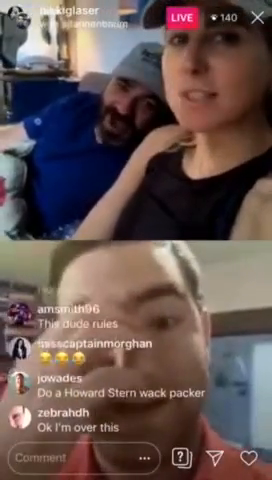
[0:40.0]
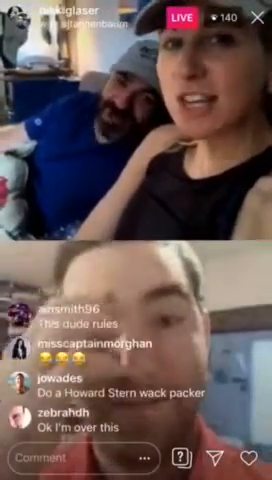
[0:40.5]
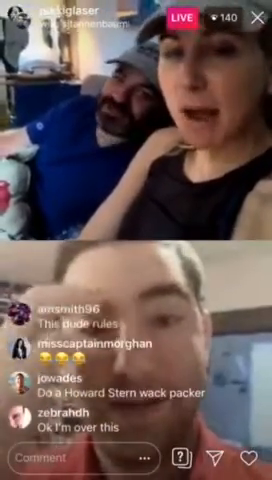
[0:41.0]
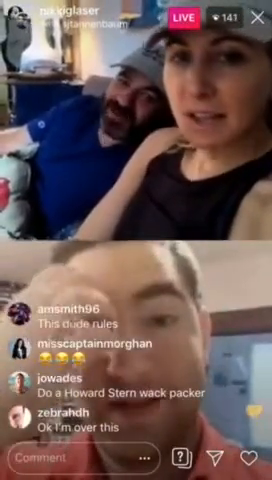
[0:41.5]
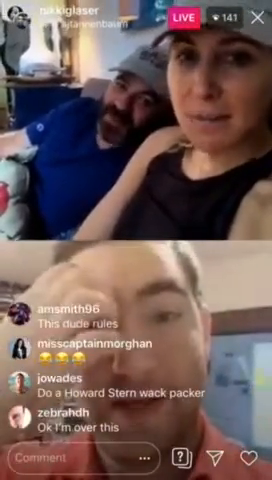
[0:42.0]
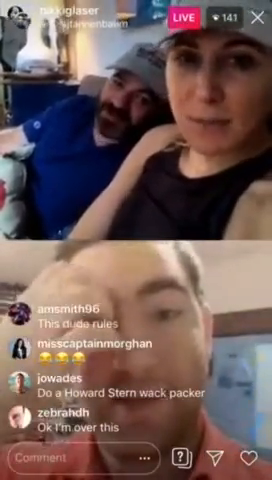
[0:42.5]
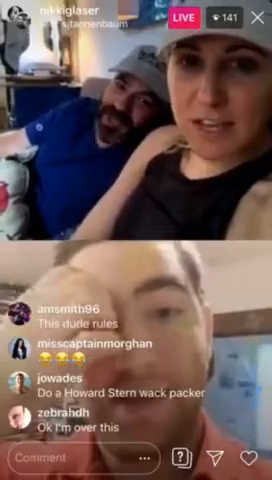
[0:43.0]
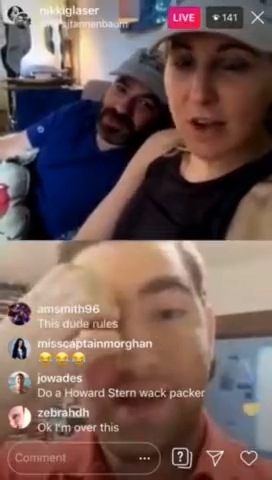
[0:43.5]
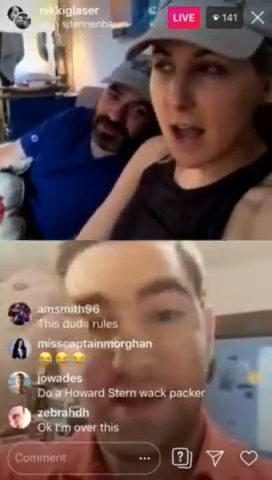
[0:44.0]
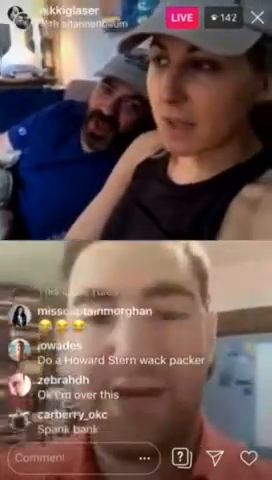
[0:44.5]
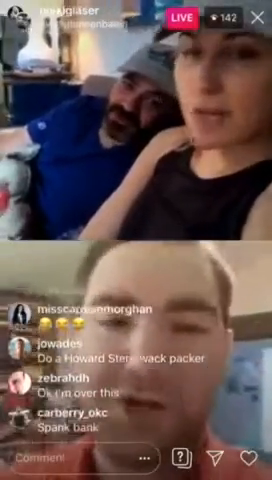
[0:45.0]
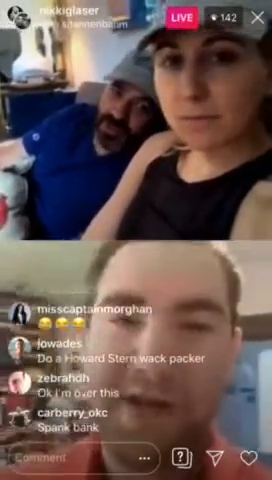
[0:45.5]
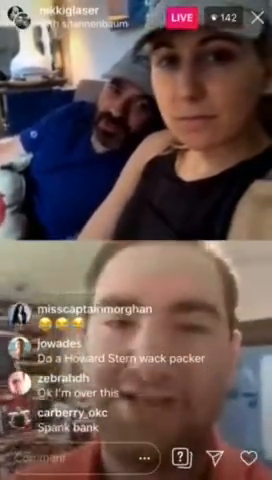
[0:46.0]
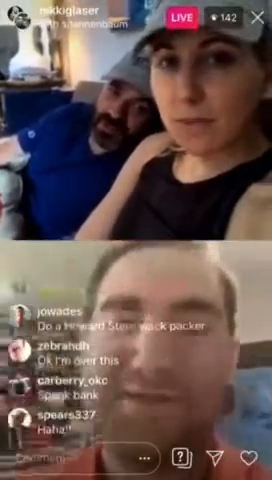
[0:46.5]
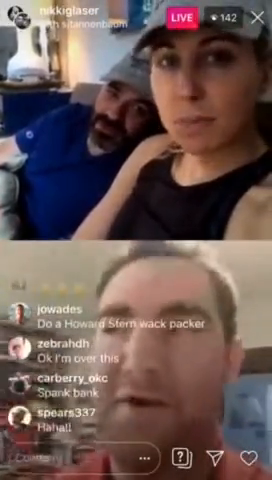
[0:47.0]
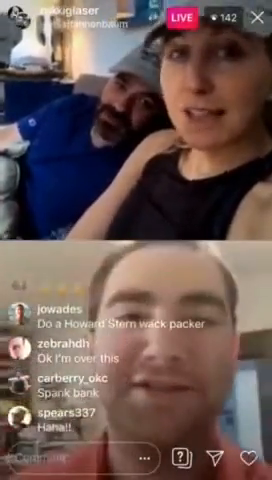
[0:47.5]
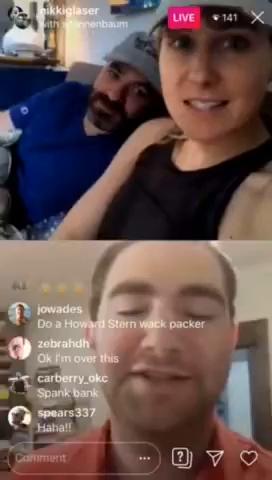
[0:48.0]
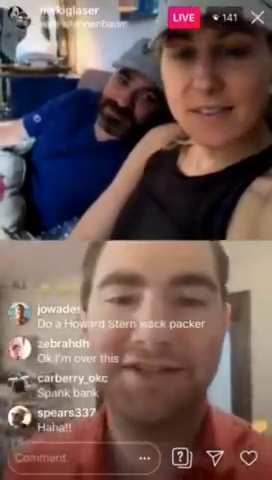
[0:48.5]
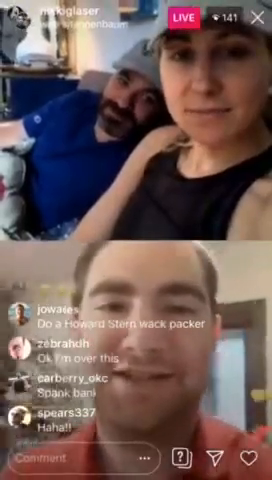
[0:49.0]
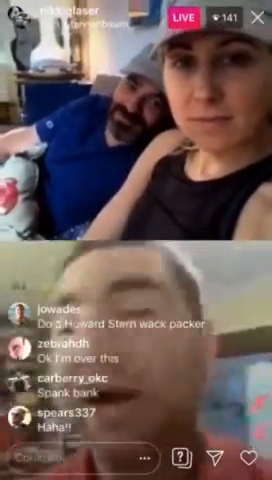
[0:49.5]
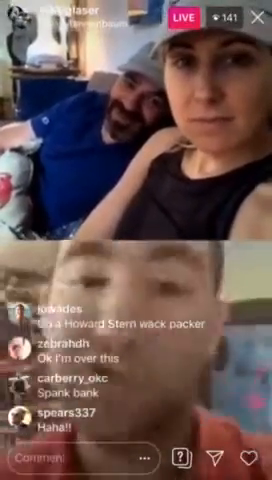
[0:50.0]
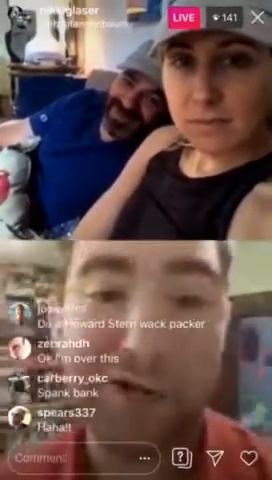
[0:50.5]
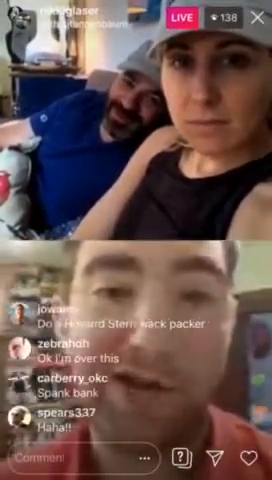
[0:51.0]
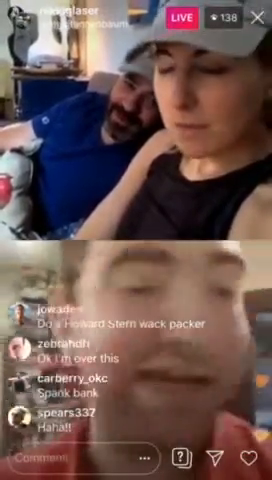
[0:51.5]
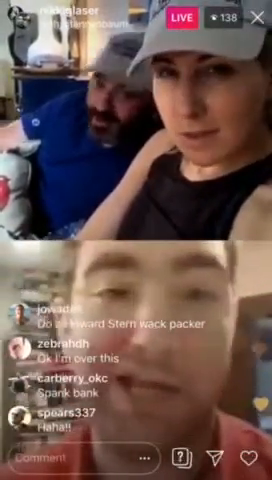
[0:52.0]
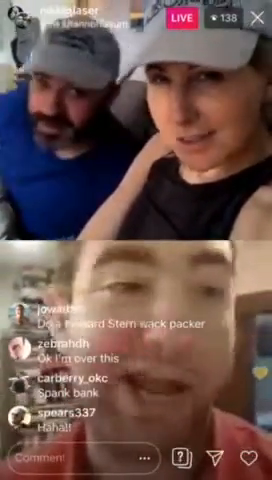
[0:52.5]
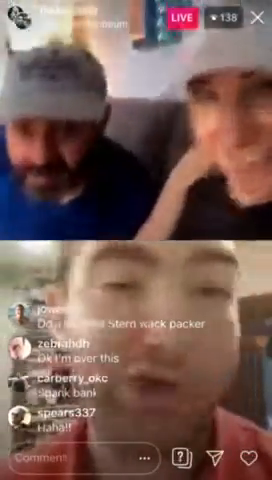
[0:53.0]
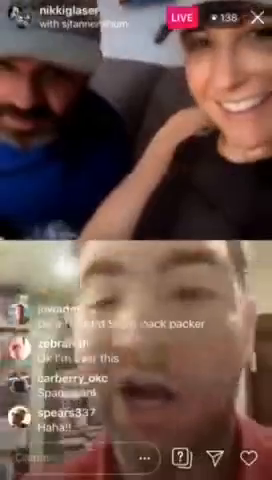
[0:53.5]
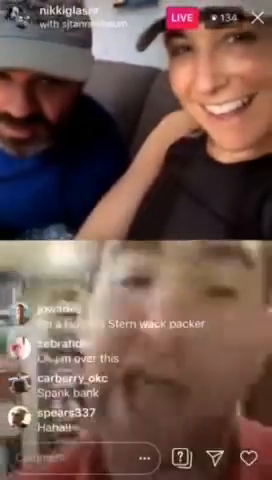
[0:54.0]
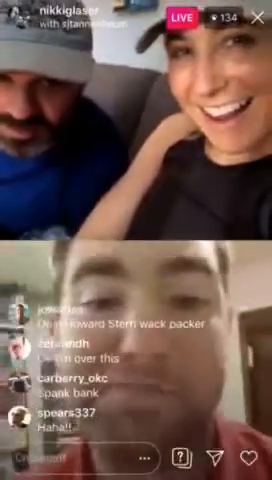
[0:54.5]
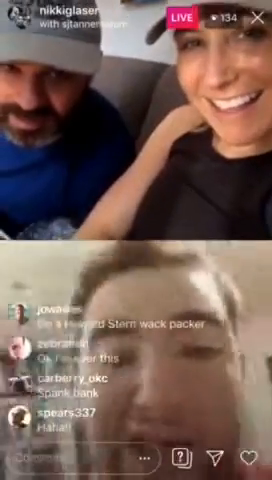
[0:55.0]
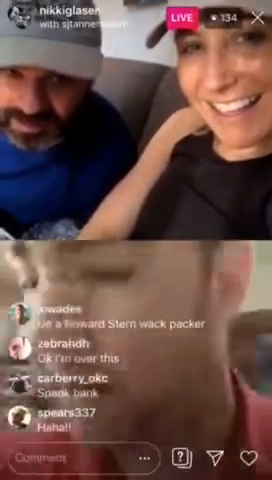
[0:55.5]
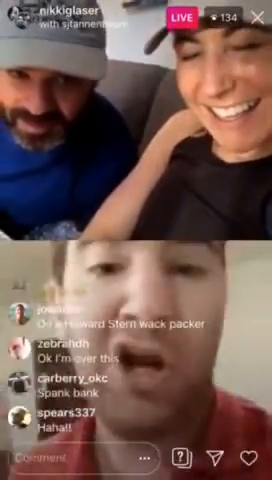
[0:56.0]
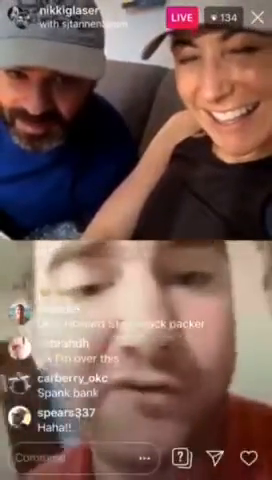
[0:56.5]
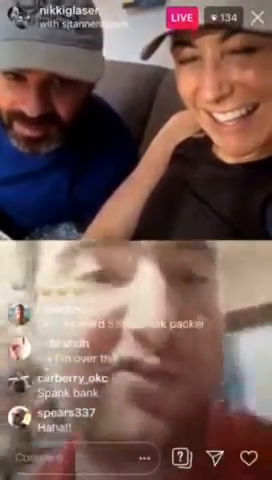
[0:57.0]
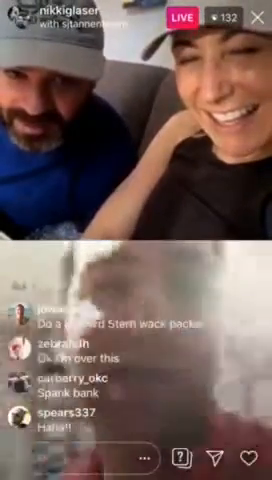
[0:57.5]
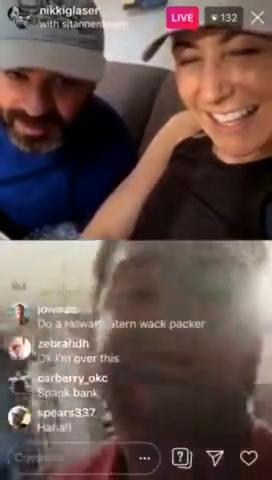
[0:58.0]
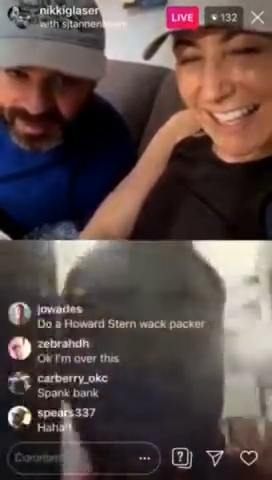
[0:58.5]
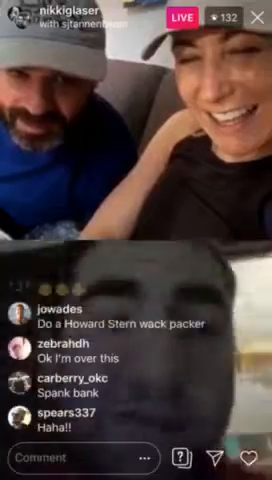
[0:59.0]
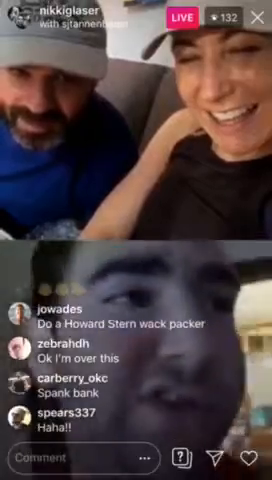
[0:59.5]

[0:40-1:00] The live stream is split between top and bottom. Several icons run across the bottom, and on the left side above them, profile pictures and names with messages scroll up as people chat. The top edge has multiple icons indicating a viewer count, that the video is live, and that the streamer is Nikki Glaser. In the top half, a man and a woman appear to be sitting on a couch, the woman closer to the camera and the man leaning in close to her. In the bottom half, a man speaks to the camera, scratching his face. The woman and the man begin to talk, and for a moment all of them appear to be talking at the same time. In the top half, the man leans forward closer to the camera, while the man in the bottom continues speaking as he walks around the building he is in.